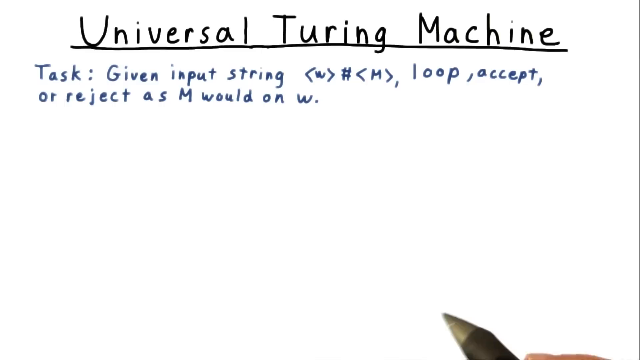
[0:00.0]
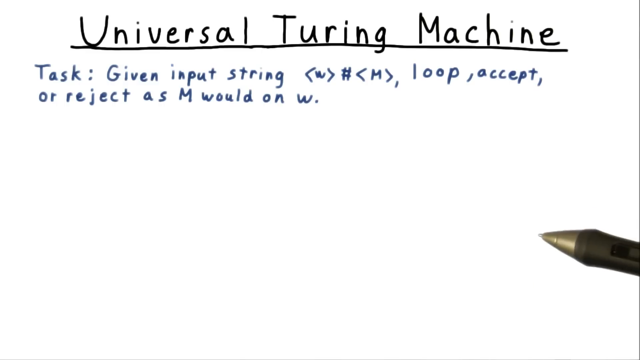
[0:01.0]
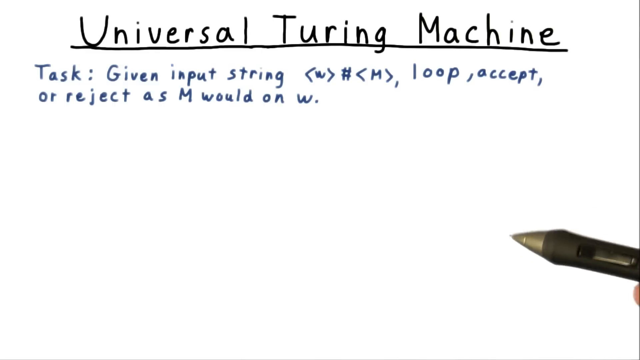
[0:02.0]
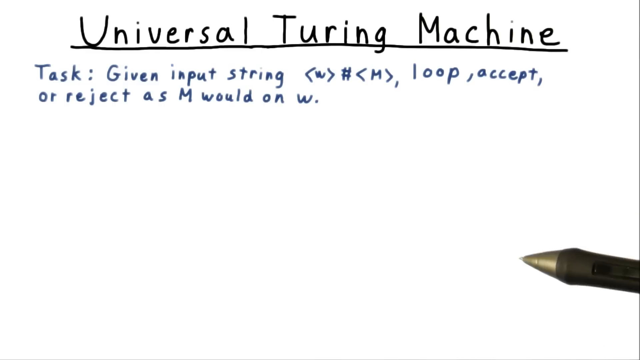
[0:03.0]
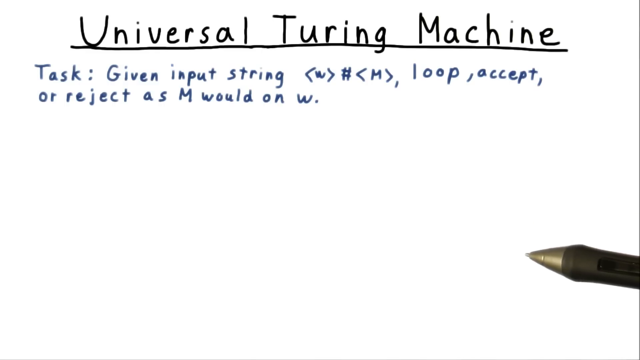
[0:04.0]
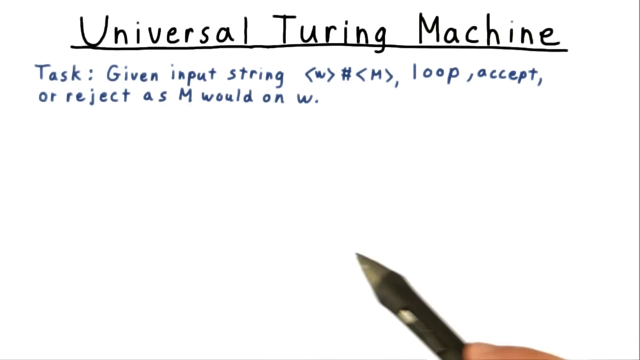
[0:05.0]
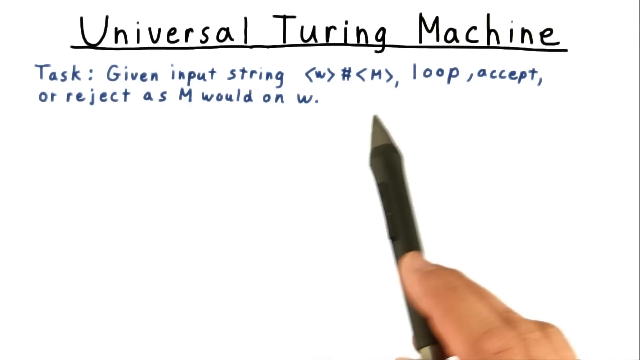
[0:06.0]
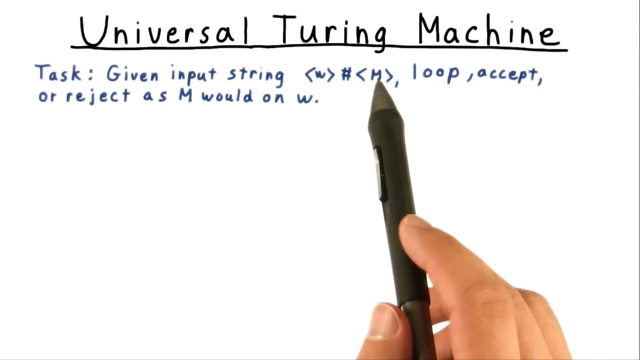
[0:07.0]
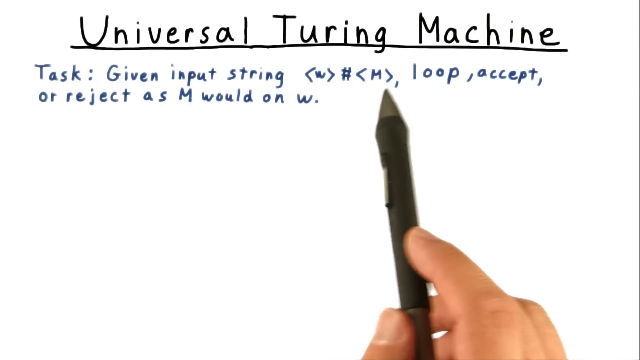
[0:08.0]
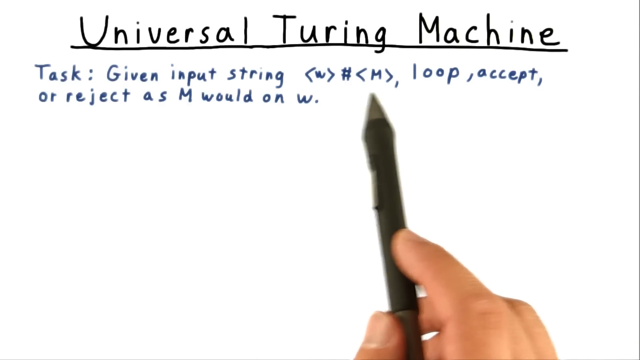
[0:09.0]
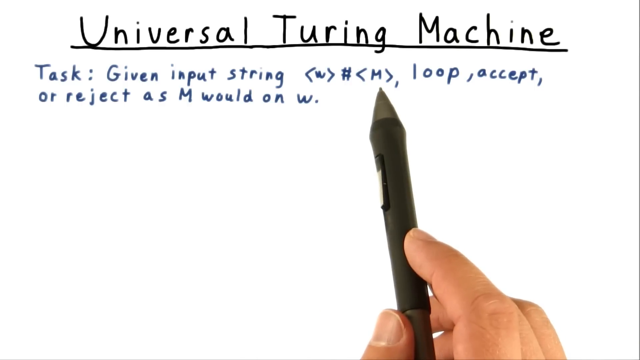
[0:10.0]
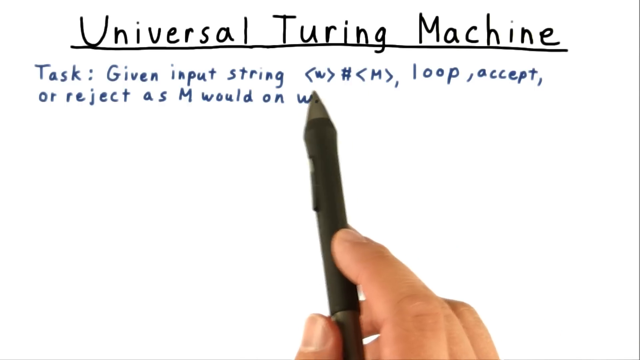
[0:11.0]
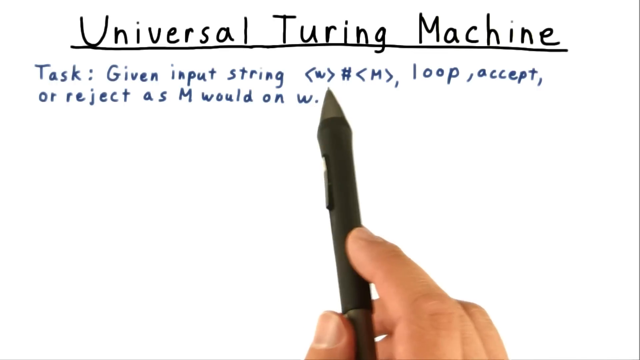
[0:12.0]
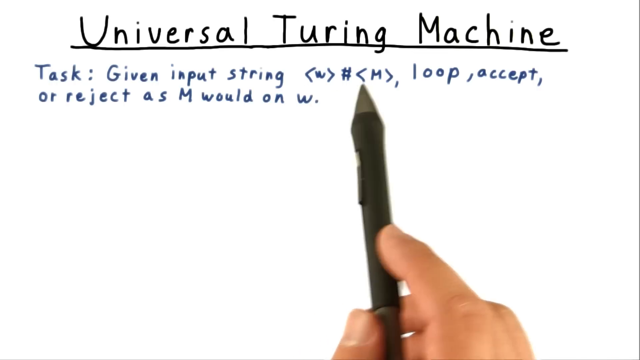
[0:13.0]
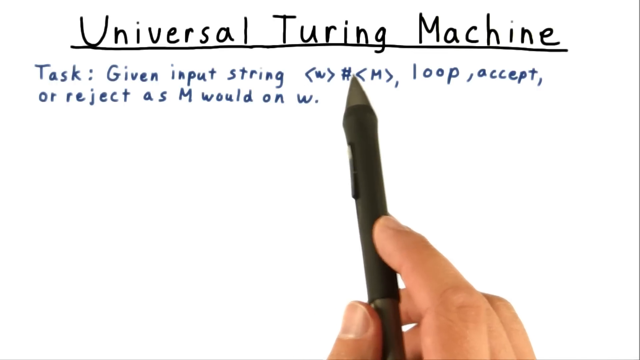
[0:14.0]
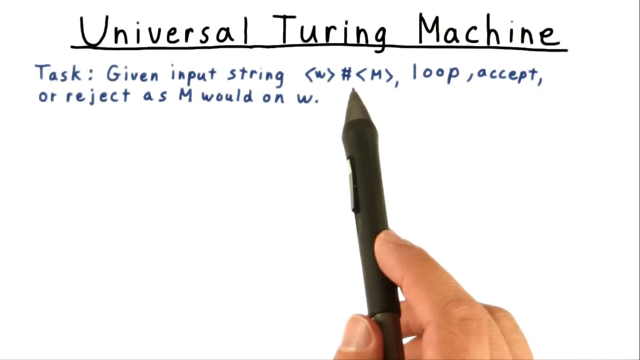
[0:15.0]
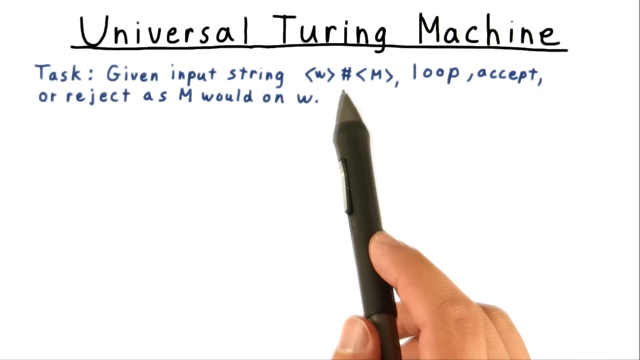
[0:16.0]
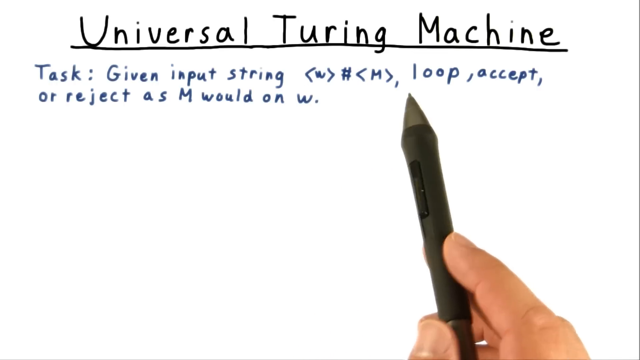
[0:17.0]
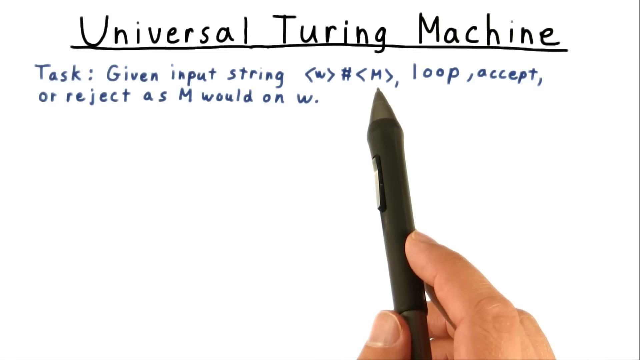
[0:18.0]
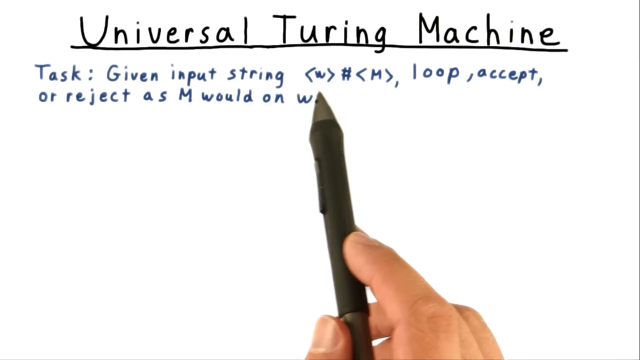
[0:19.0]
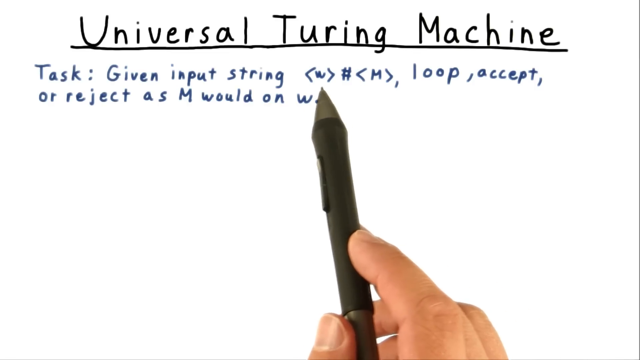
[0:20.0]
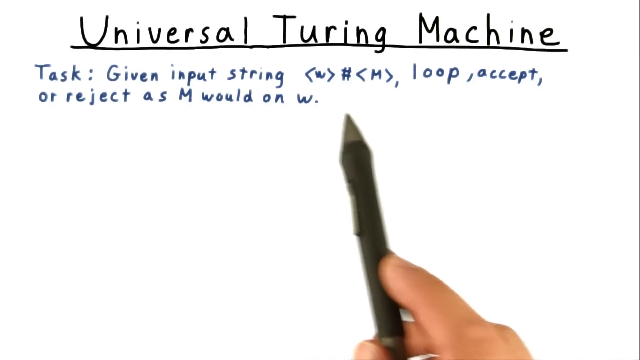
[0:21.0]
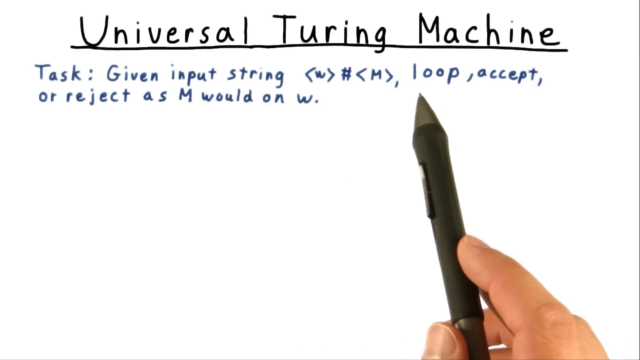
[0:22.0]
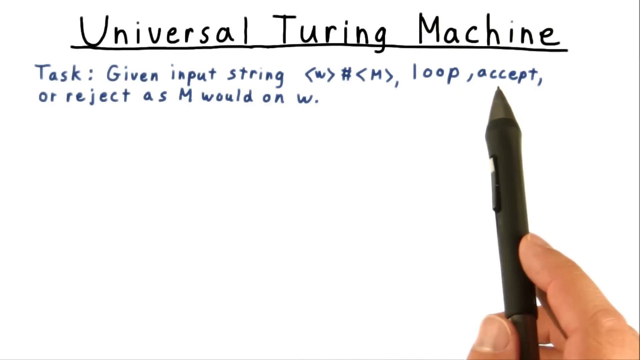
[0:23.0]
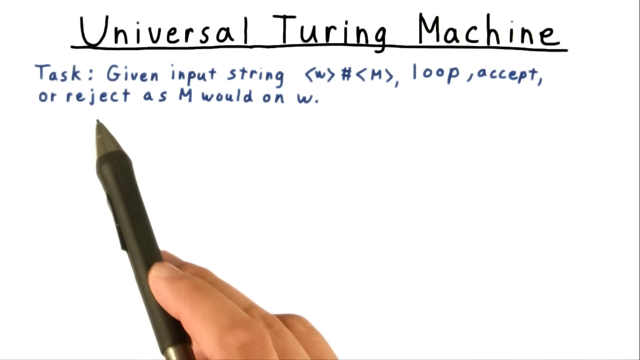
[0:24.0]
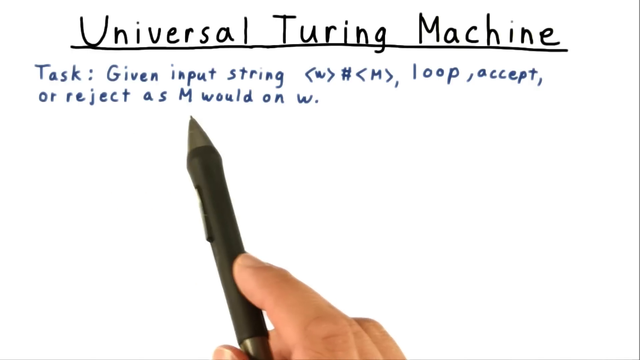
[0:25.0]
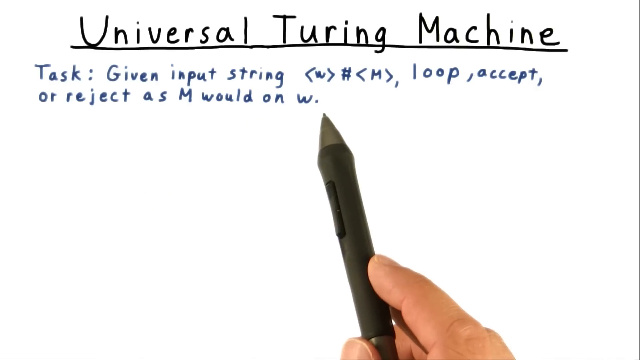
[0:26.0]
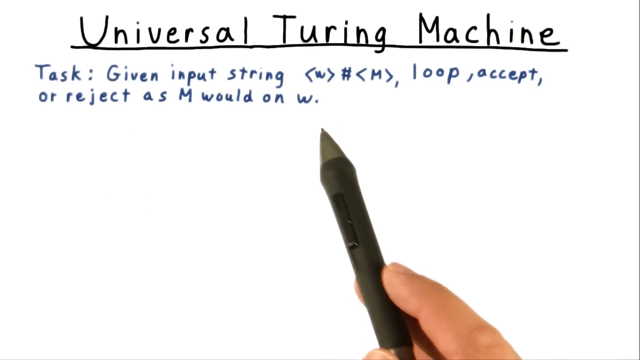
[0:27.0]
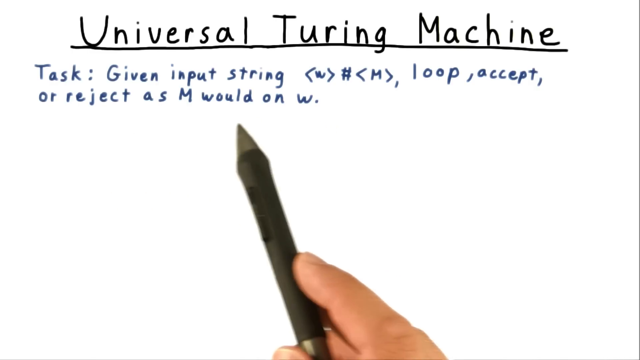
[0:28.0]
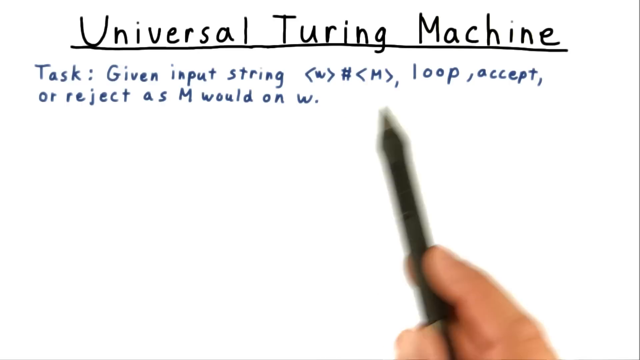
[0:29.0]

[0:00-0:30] A digital whiteboard is shown. At the top is an underlined title in black text that says "Universal Turing Machine." Below it is a short description in slightly smaller blue text: "task: given input string <w>#<m>, loop, accept, or reject as m would on w." A person holding a stylus pen interacts with the screen, and the pen is the only thing visible. The stylus first hovers around the bottom right-hand corner, then moves up to the description and moves quickly from left to right underneath the m, then does the same under the w. It moves to the hash in the middle and draws mini circles around it in a hovering motion, goes back to the M and underlines it in a hovering motion, then back to the W in a hovering motion. It then points at "loop," points at the "accept" text, and moves to the latter part of the sentence, hovering underneath it.